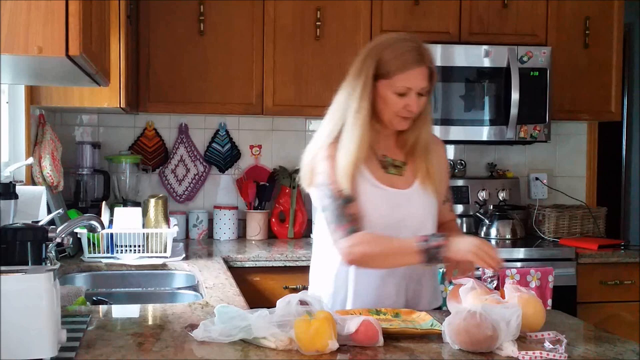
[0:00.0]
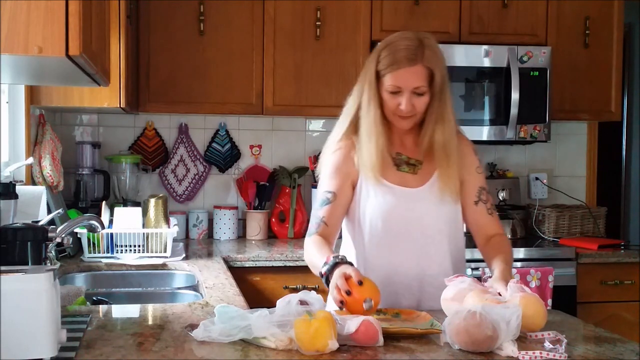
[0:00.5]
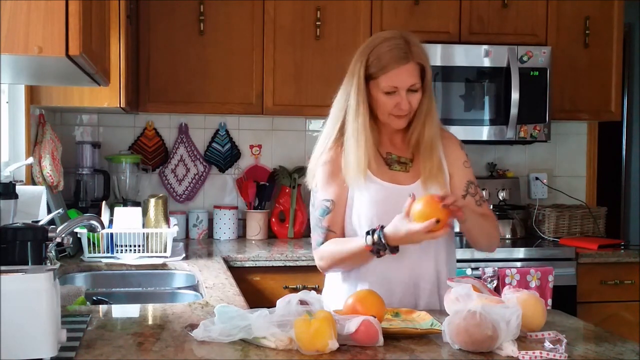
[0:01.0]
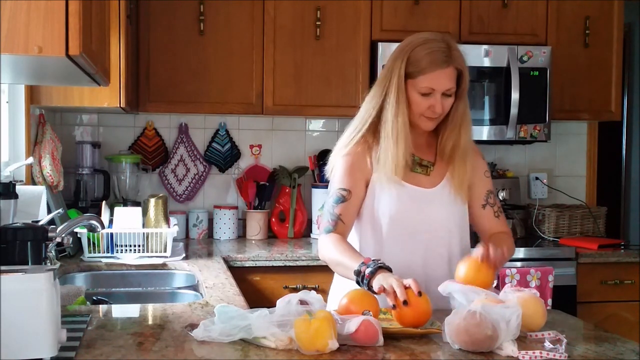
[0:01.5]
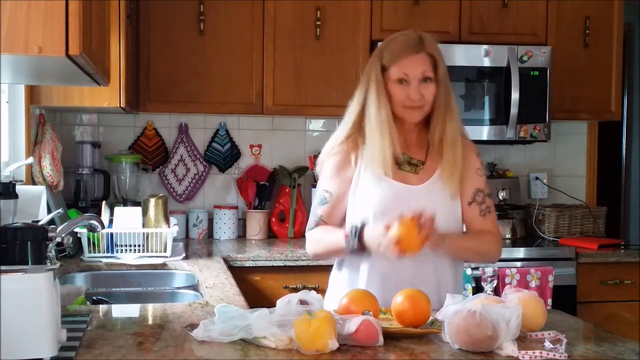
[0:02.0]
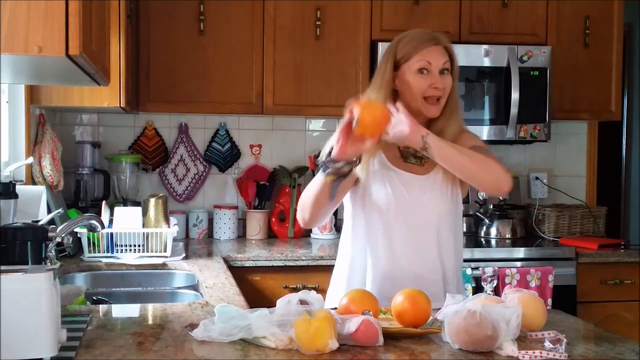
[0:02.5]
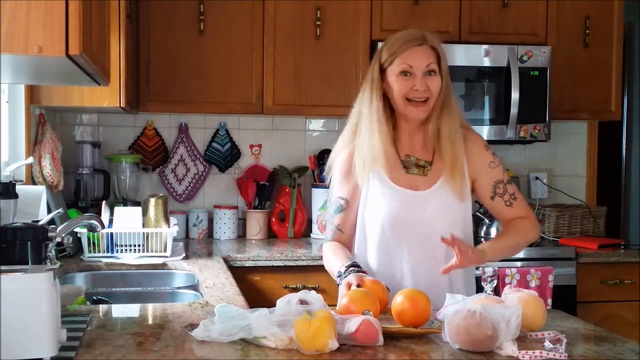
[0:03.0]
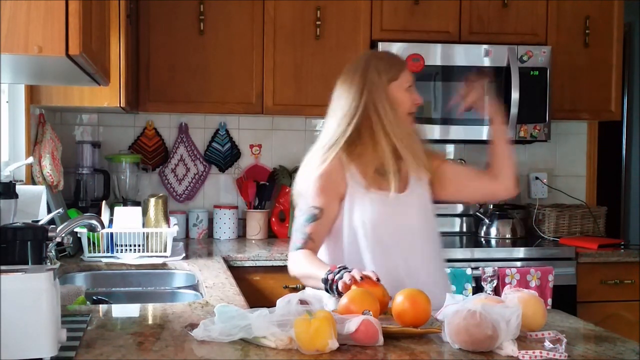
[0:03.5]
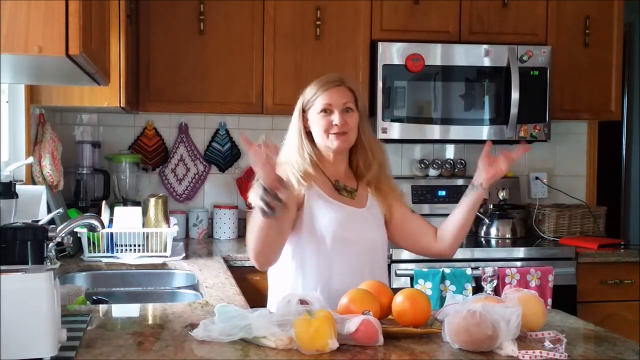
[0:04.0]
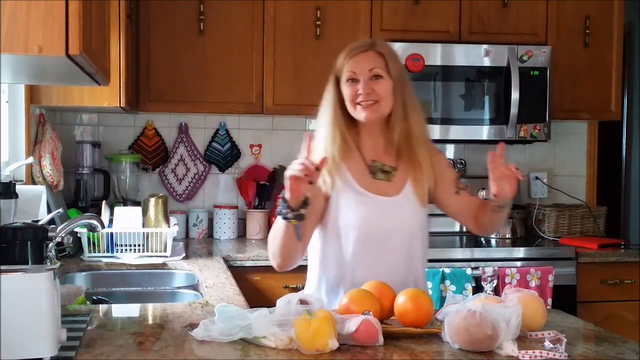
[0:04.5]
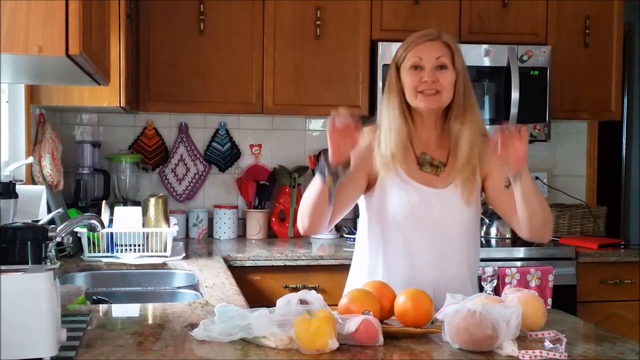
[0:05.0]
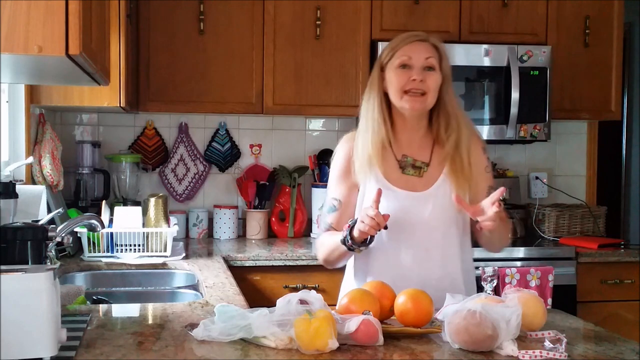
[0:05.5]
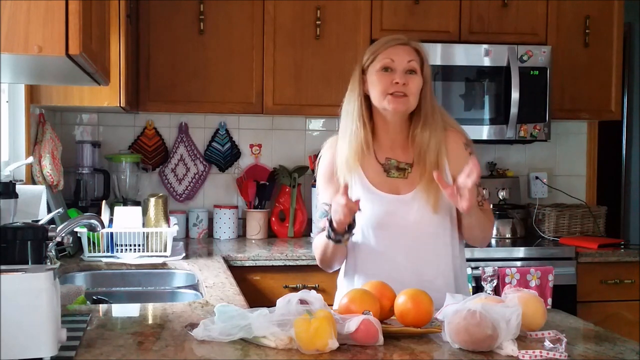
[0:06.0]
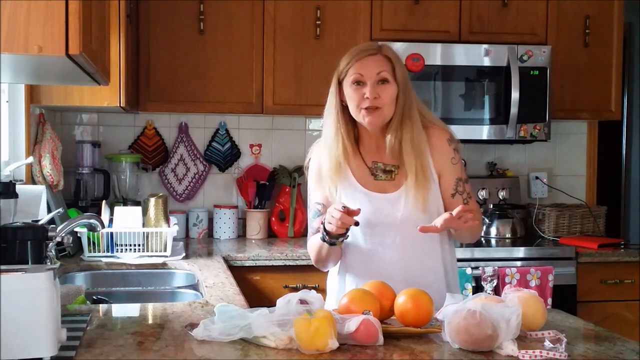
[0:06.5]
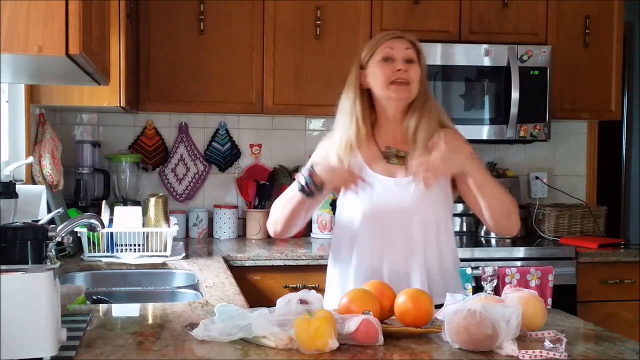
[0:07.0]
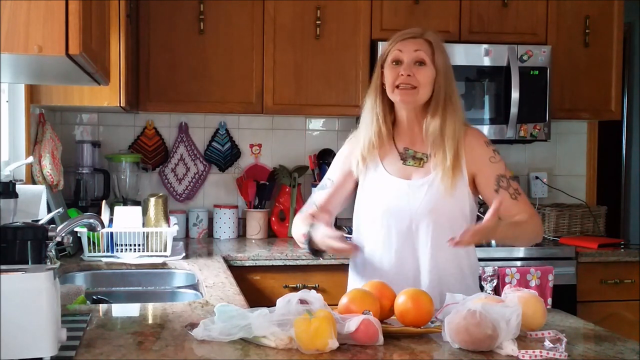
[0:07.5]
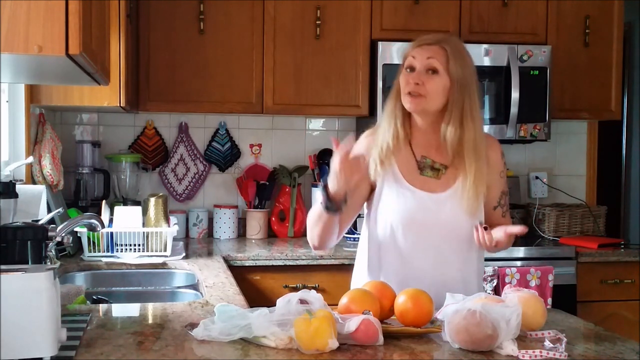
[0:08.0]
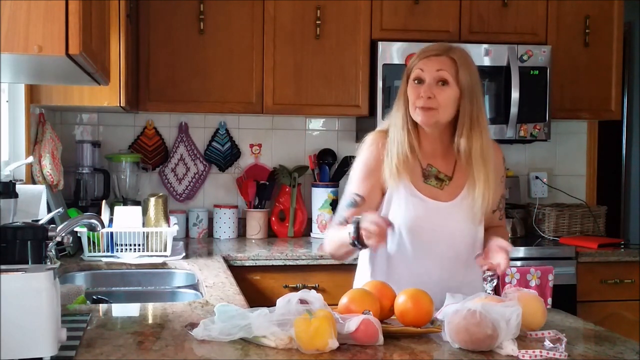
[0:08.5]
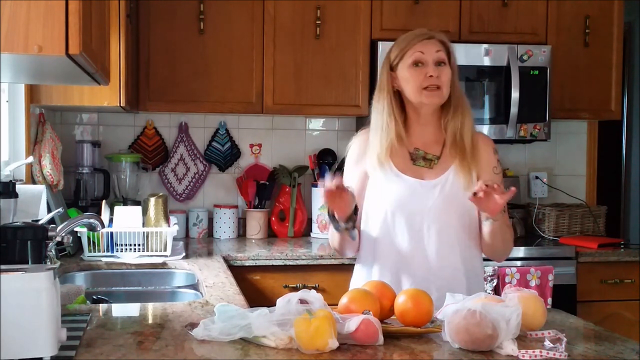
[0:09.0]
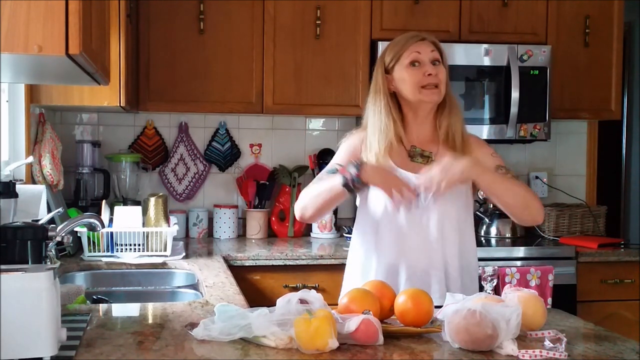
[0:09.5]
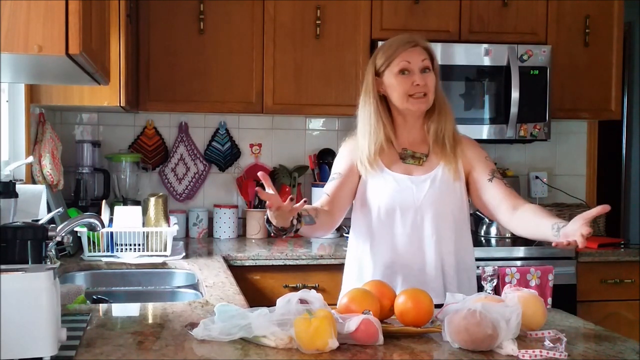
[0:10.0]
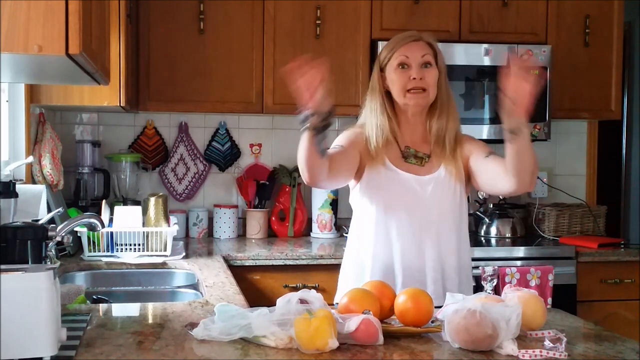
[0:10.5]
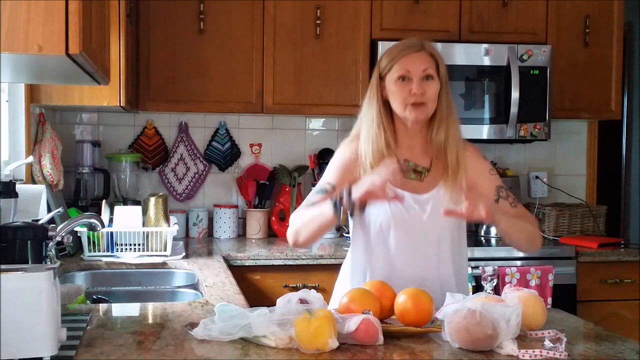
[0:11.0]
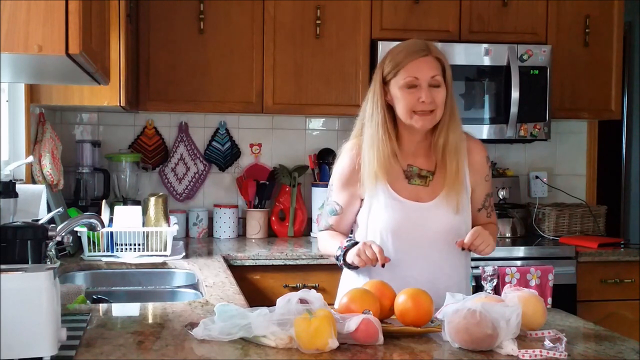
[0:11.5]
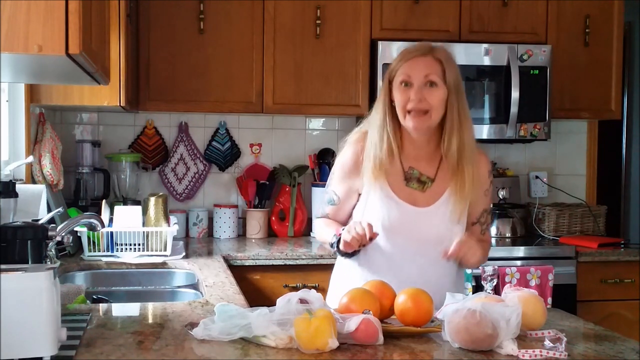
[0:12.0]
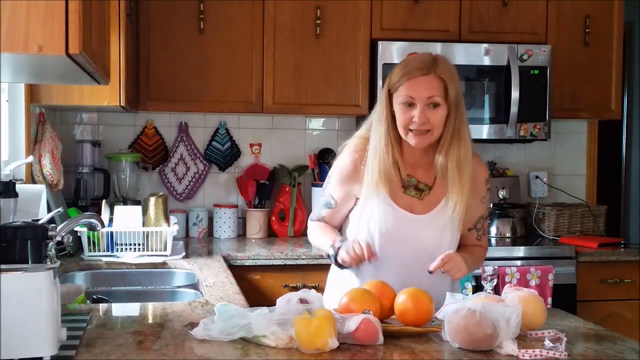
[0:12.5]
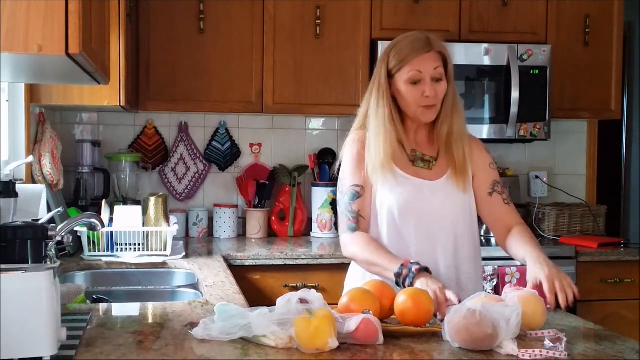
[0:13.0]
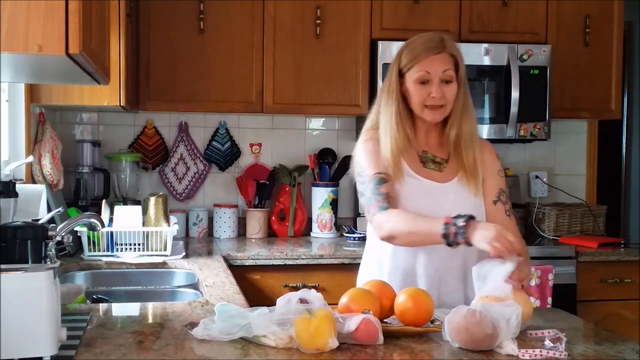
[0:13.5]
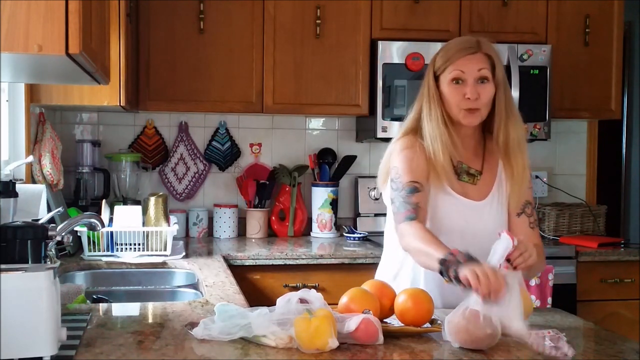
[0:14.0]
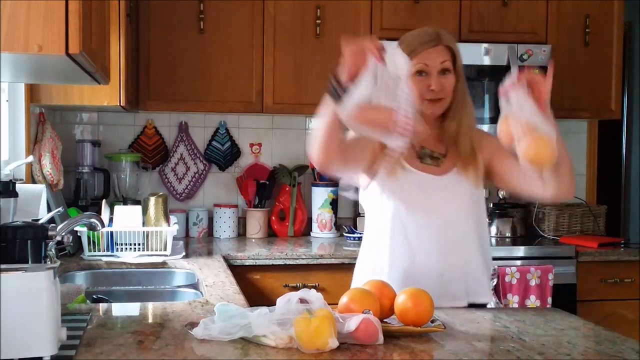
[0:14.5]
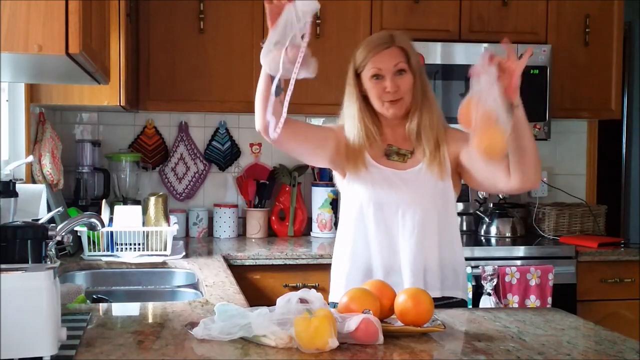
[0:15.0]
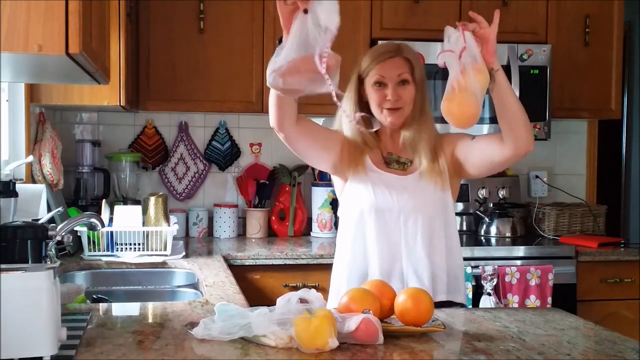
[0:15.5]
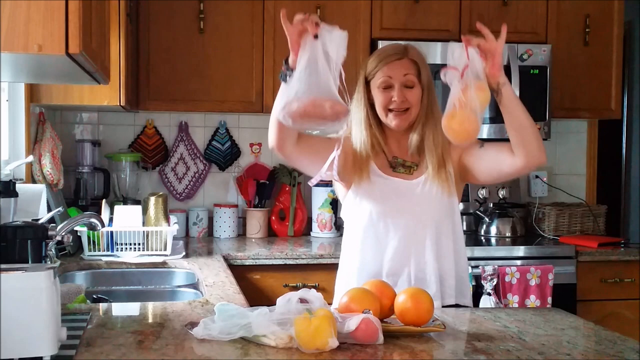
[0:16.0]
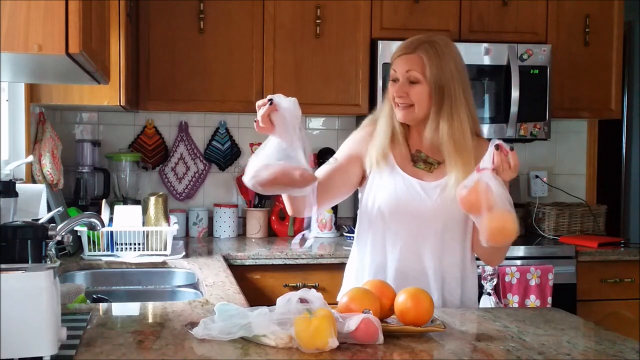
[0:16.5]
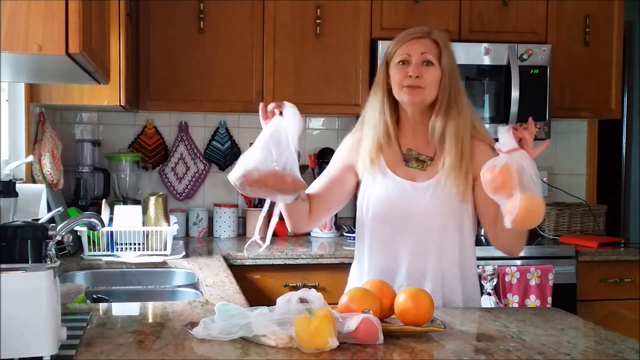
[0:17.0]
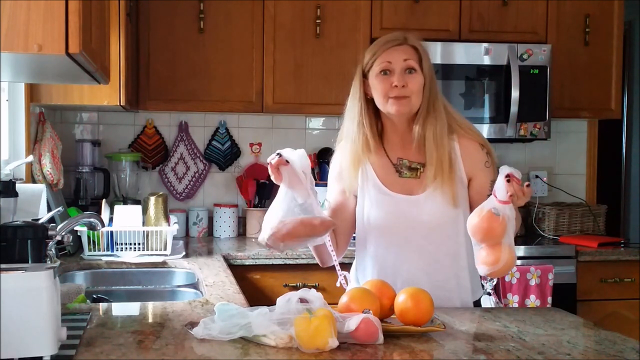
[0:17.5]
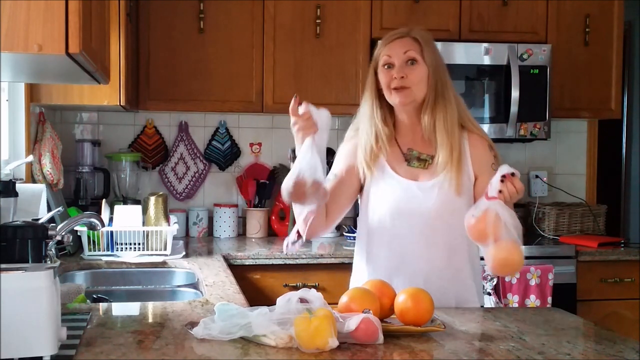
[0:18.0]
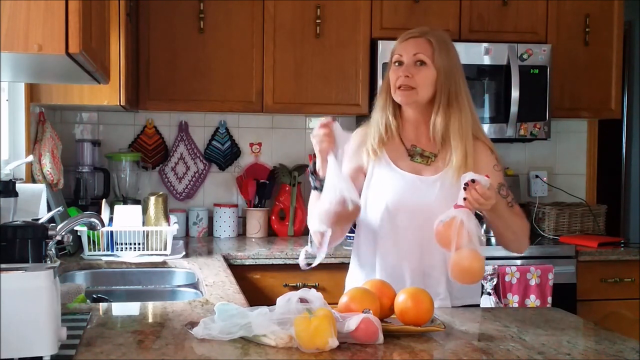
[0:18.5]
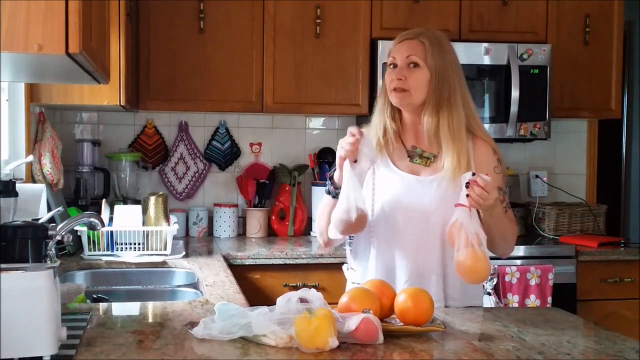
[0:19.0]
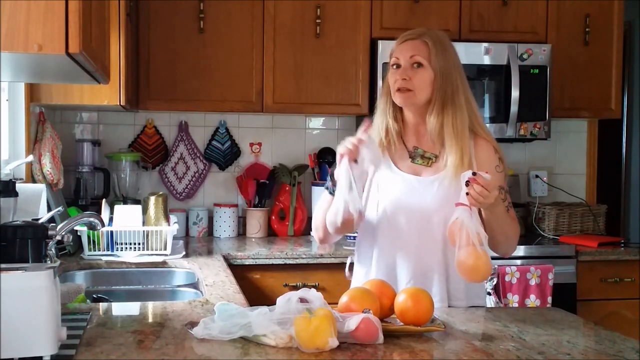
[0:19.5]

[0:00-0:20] The video appears to be set in a kitchen with lots of utensils and other things. An older woman, seemingly somewhere between 45 and 50 years old, brings out multiple oranges. She seems very energetic and has blonde hair and a white dress shirt.